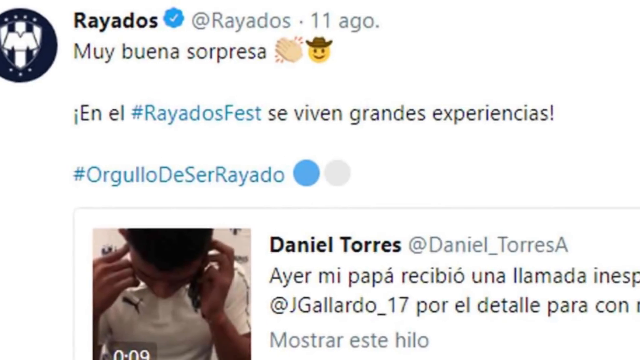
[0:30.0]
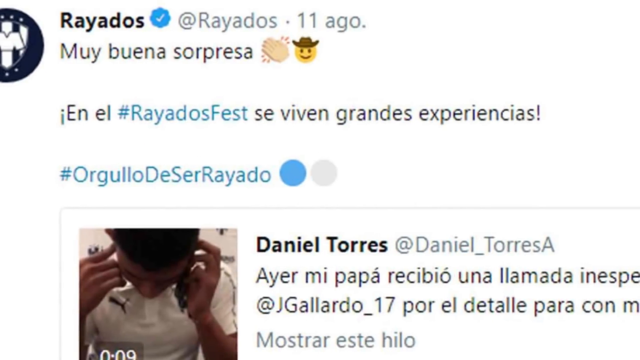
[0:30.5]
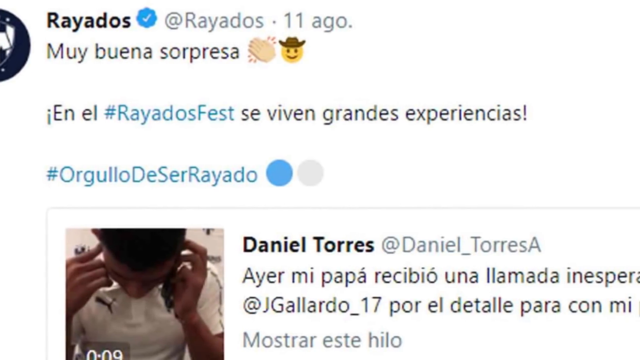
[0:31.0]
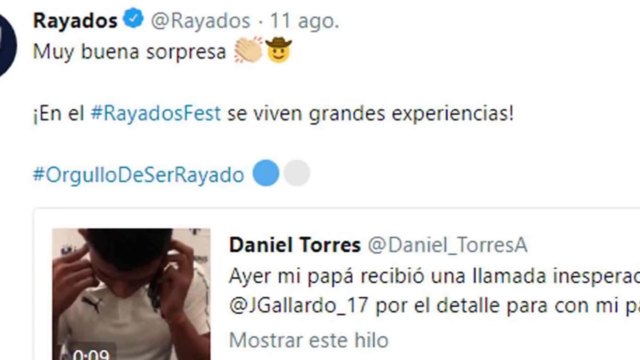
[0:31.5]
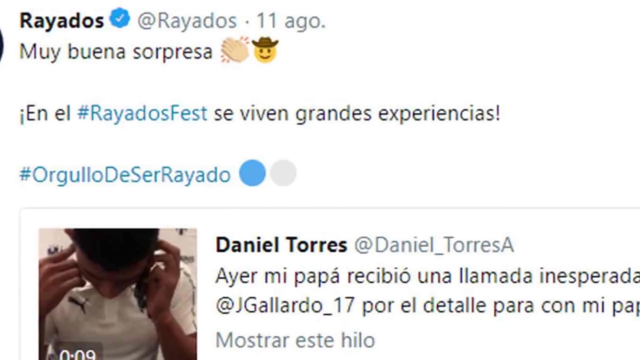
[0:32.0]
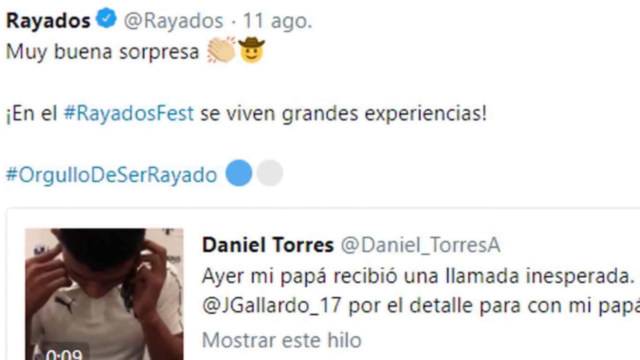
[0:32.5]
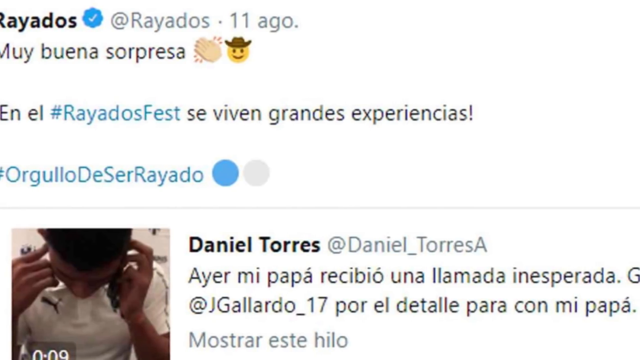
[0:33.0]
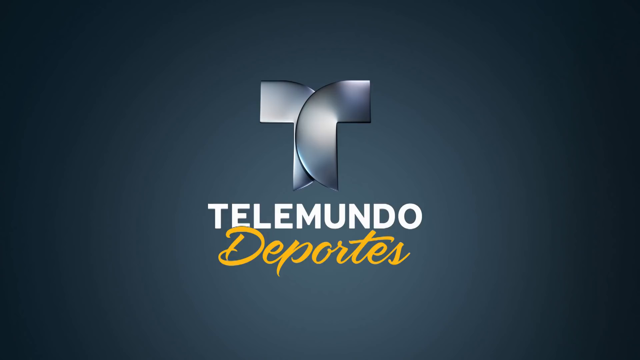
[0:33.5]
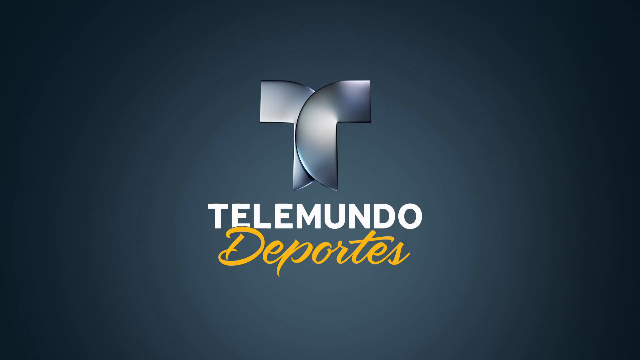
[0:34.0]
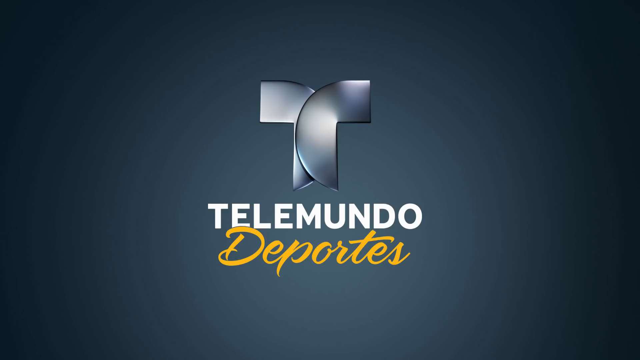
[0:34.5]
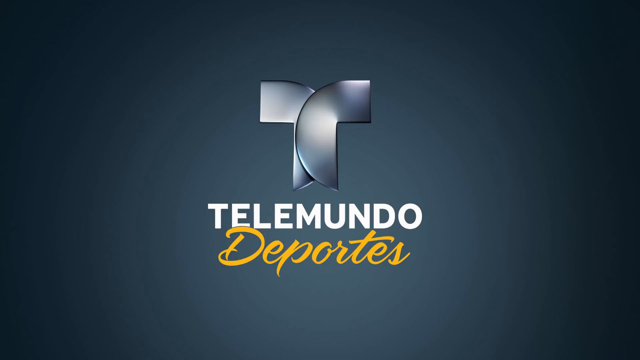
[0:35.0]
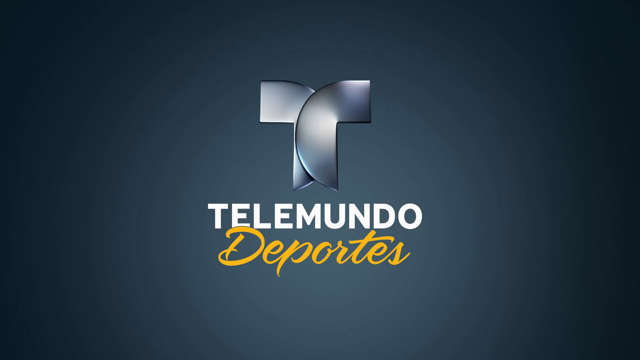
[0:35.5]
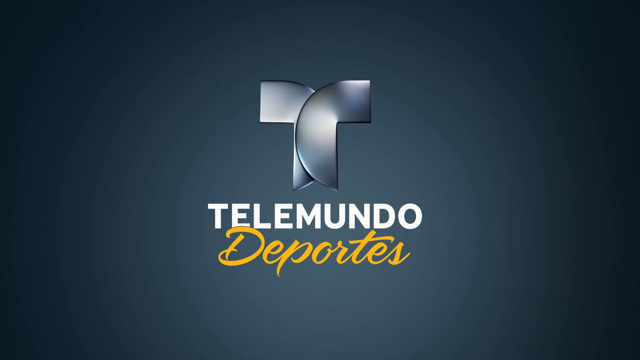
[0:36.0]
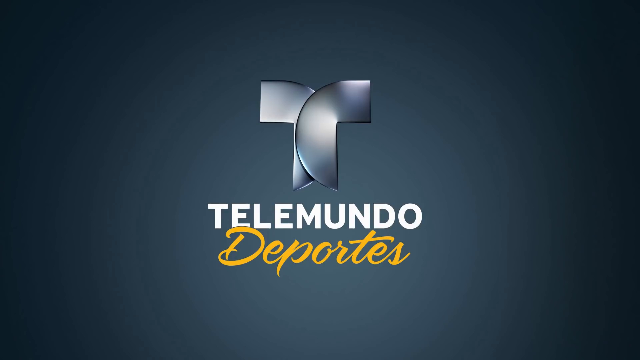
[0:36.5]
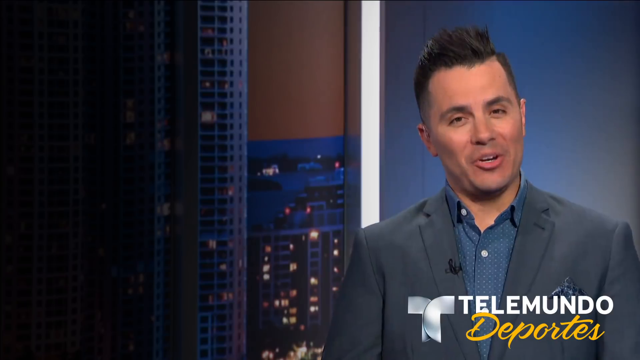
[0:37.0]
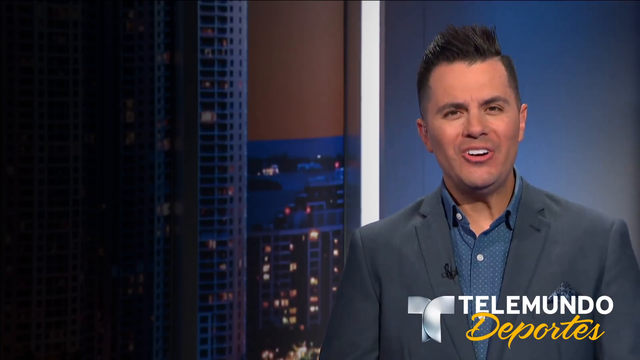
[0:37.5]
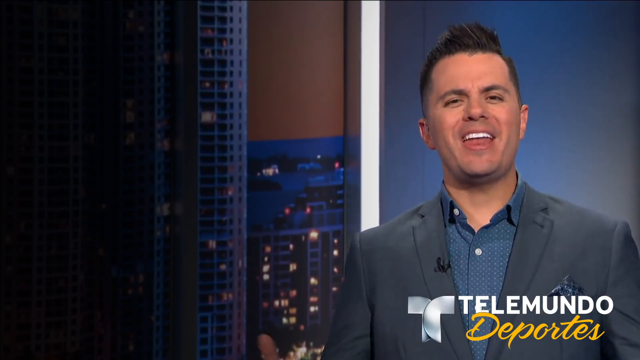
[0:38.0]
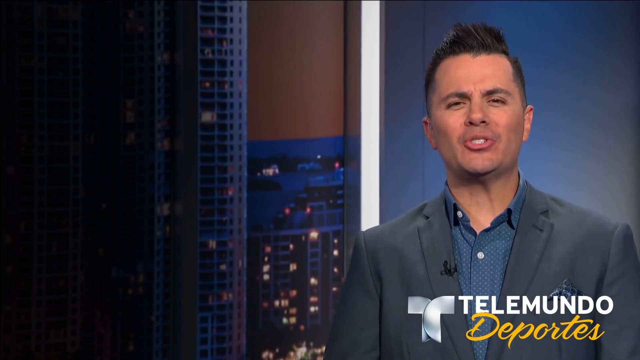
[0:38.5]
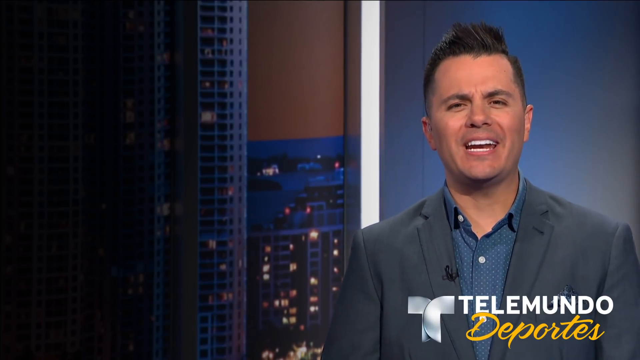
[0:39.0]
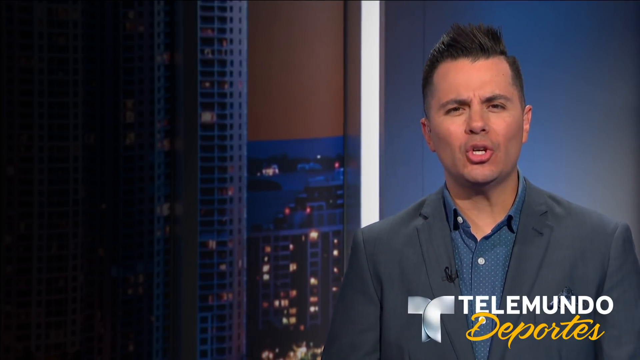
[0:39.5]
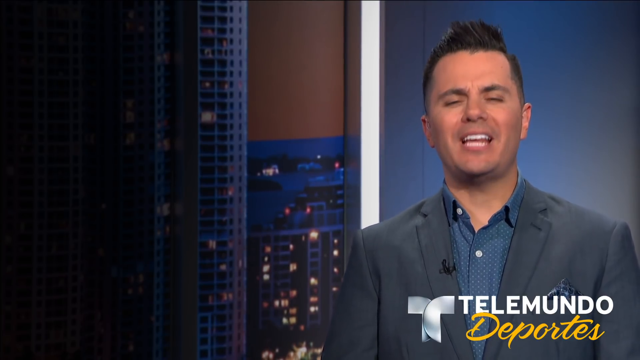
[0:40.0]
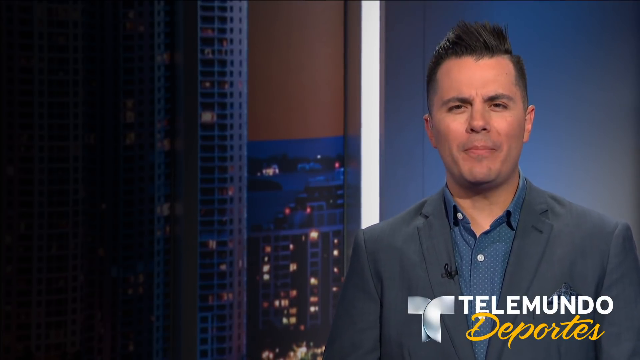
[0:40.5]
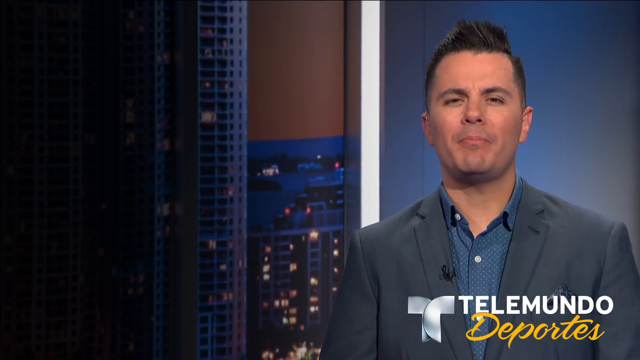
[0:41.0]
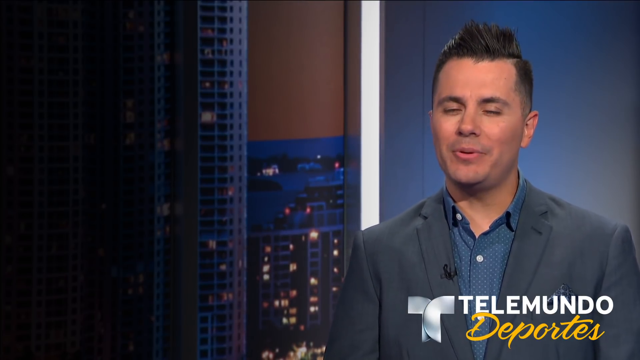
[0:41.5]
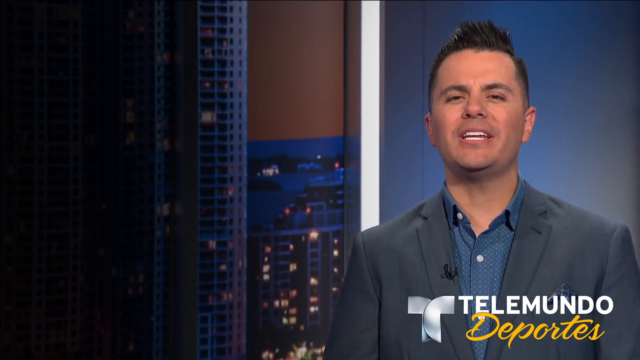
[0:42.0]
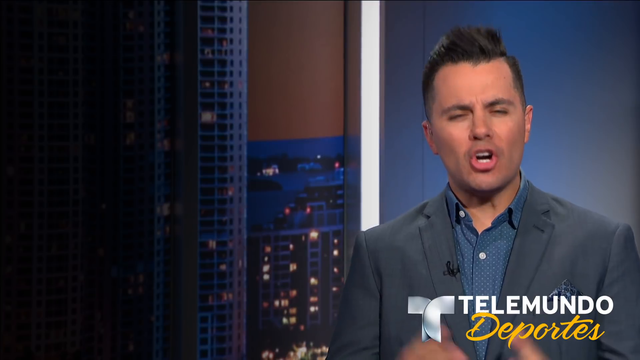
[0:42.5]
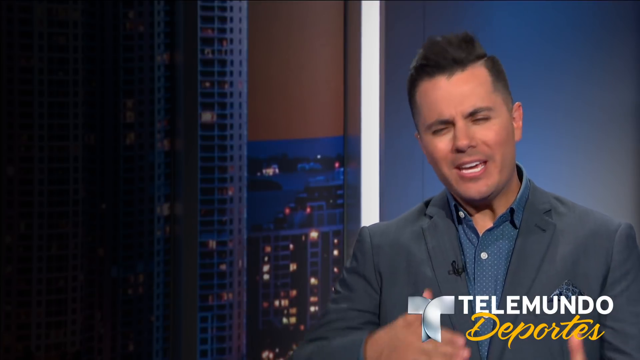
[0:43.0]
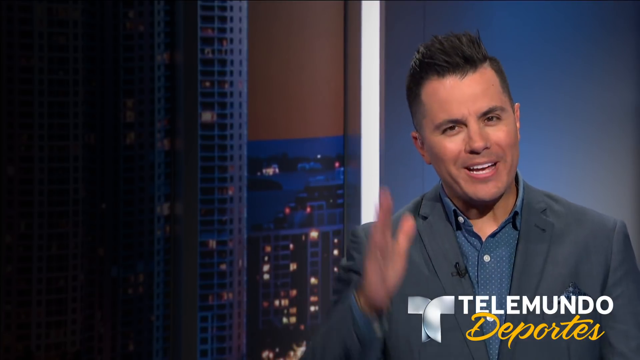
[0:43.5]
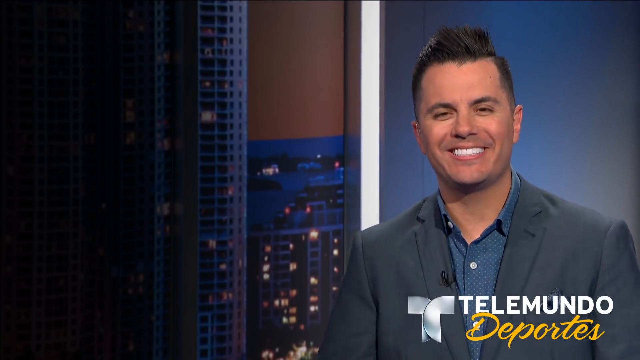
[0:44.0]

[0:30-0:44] A tweet pans from left to right. It shows a picture of a player on the phone and some writing in Spanish from the account Reatos, along with a couple of emojis: the clapping hands emoji and a cowboy hat smiley face emoji. Next, the Telemundo Deportes logo appears: a curved T of a kind of metallic silver color in the center of the screen, with the word "Telemundo" written in white and "Deportes" in a cursive yellow font. Then a man speaks. He wears a dark charcoal gray suit jacket and a blue shirt with tiny white spots. His short black hair is very short on the sides and a little longer on top, kind of spiked vertically. He smiles, showing very bright white teeth, and talks expressively with his hands.